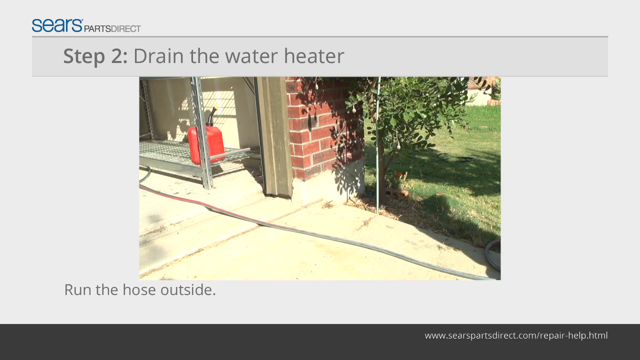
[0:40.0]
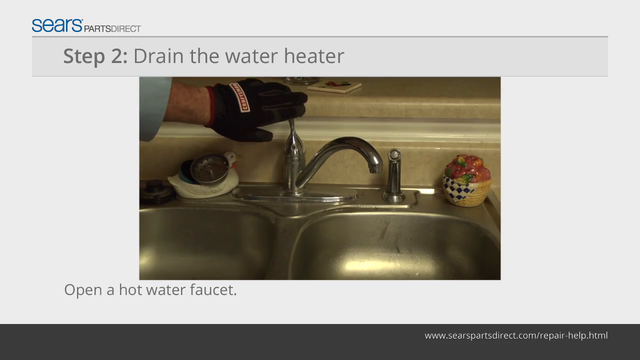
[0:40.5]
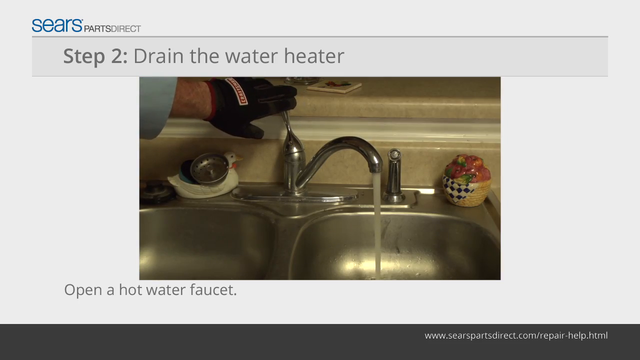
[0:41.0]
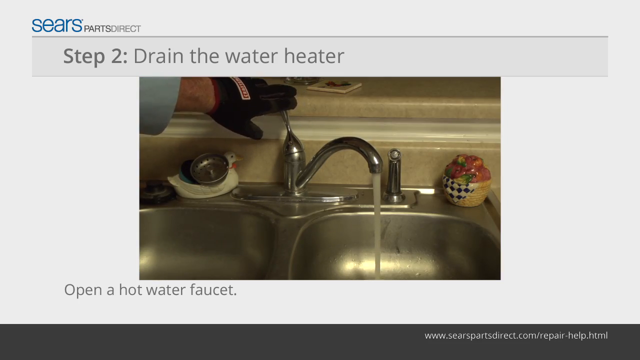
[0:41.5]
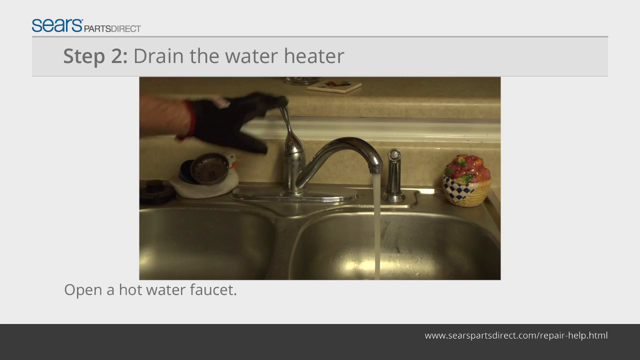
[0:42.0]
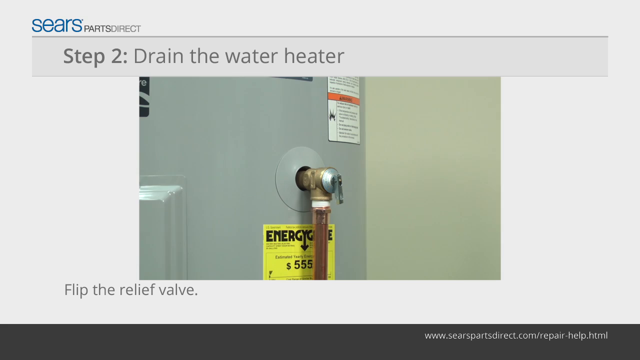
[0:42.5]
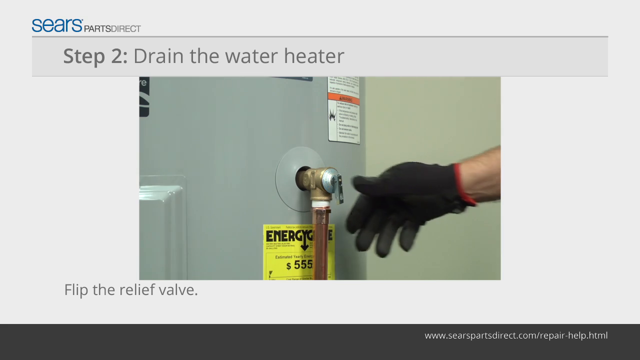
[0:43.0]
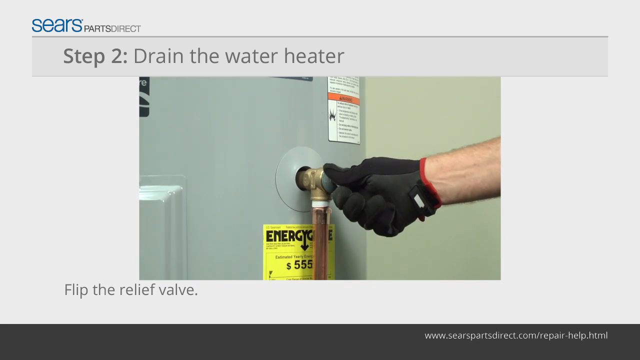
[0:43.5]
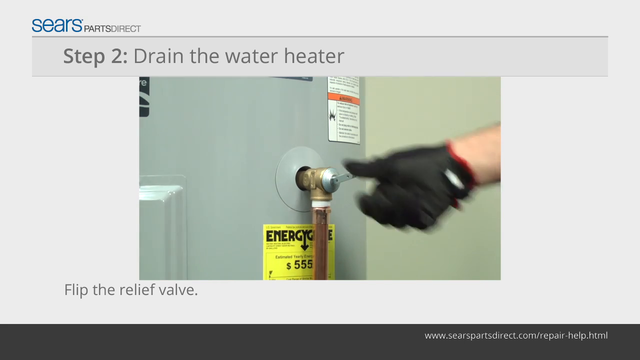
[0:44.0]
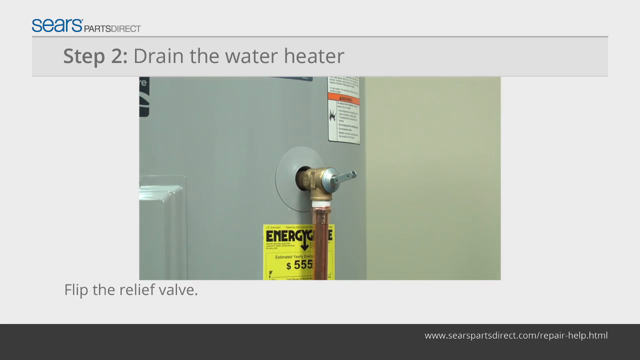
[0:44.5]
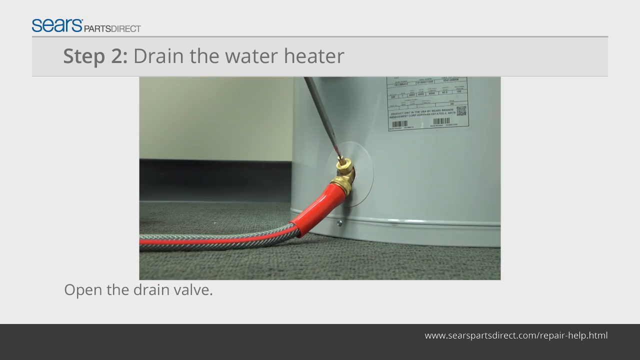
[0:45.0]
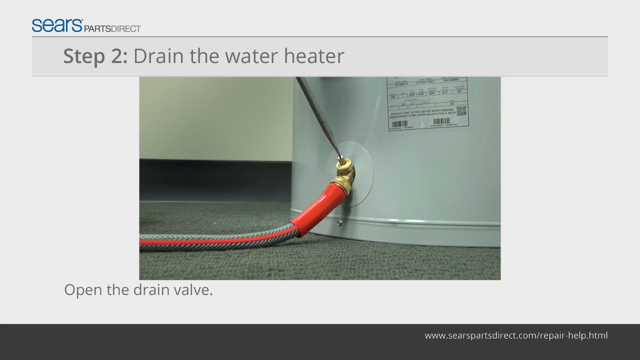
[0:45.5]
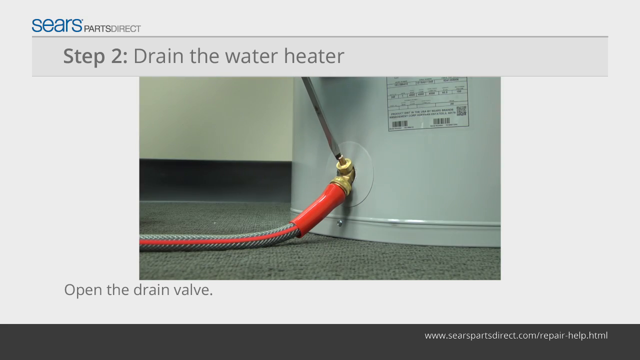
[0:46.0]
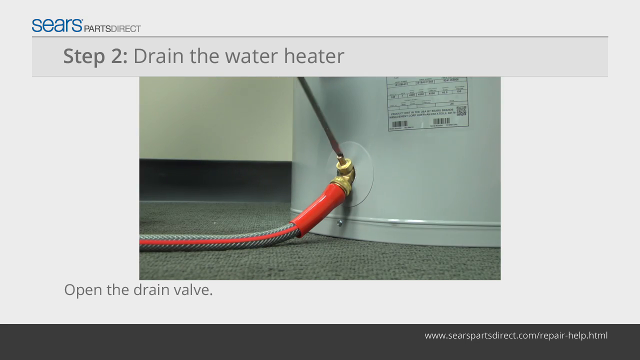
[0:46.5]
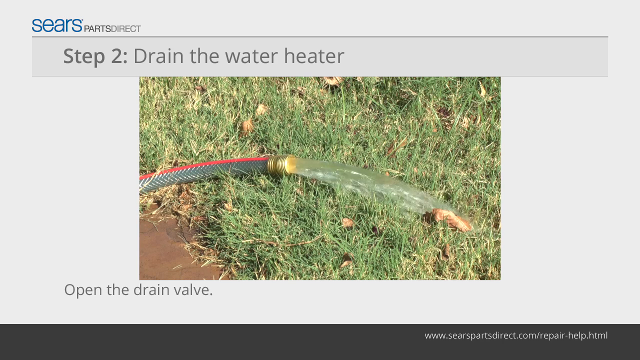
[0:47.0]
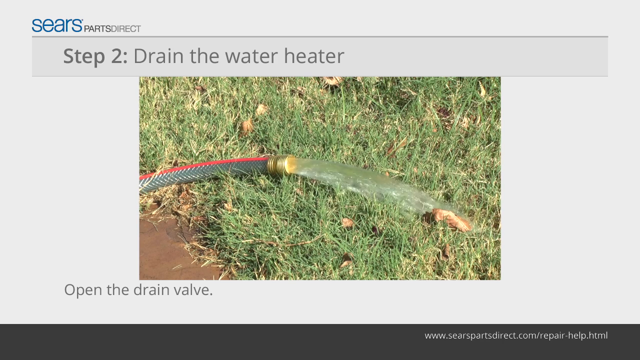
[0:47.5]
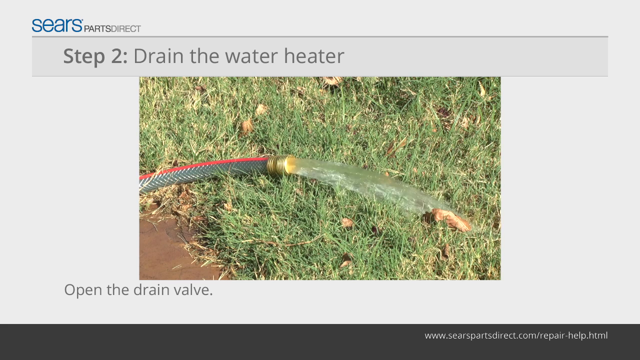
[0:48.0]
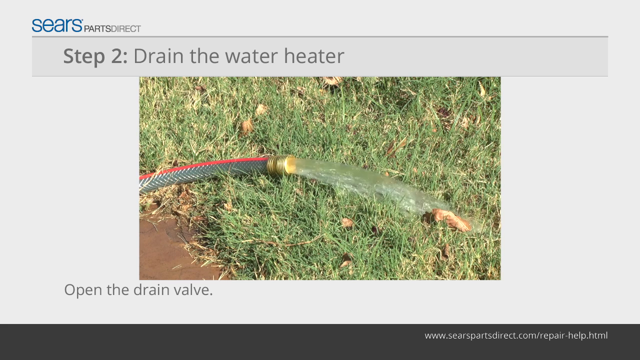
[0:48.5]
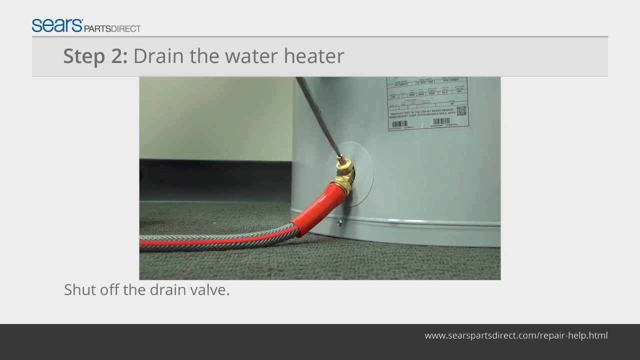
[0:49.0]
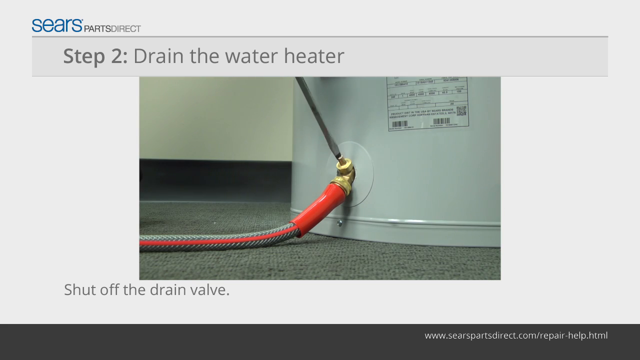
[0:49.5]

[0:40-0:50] The drain-the-water-heater step continues, showing the hose being taken outside the house so the water can drain out of the water heater. Still in step two, every screen has the same gray background with Sears Parts Direct on it. A picture shows a silver sink with the usual sink fixtures and someone in work gloves turning on the sink, with the text "open hot water faucet". The next screen, still in step two with the same background and font, says "flip the valve" and returns to the water heater, showing a person in gloves flipping the valve up. The valve comes out of the water heater, on top of an EnergyGuide, apparently to the side; above it is some writing in a white area, and something that looks like copper goes down. The next screen says "open the drain valve": where the hose was attached, a screwdriver removes a screw, apparently opening it so the water can come out of the hose. Still in step two, the hose is shown outside in the grass with water coming out of it onto the grass.